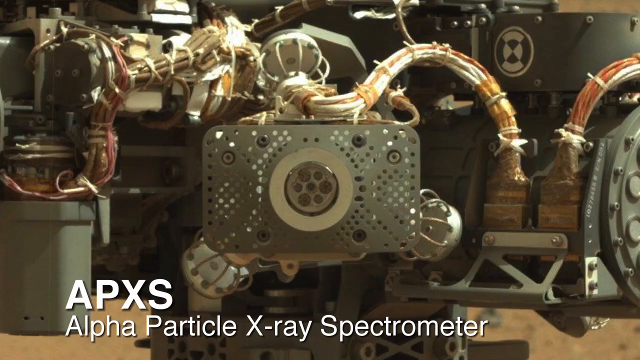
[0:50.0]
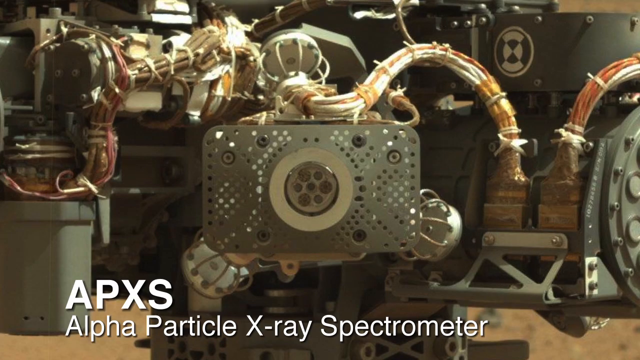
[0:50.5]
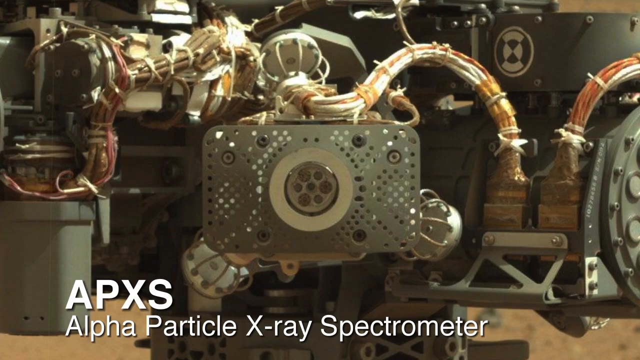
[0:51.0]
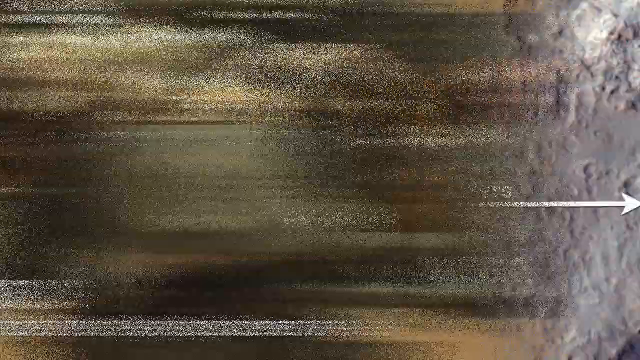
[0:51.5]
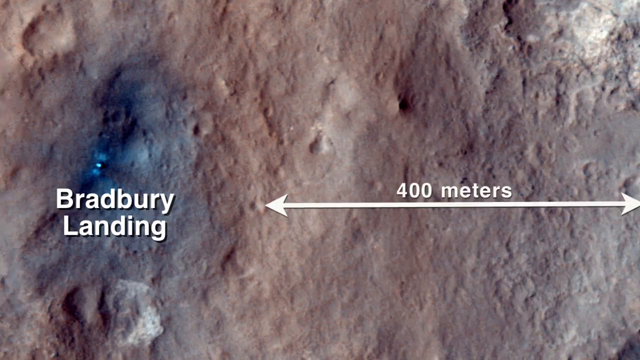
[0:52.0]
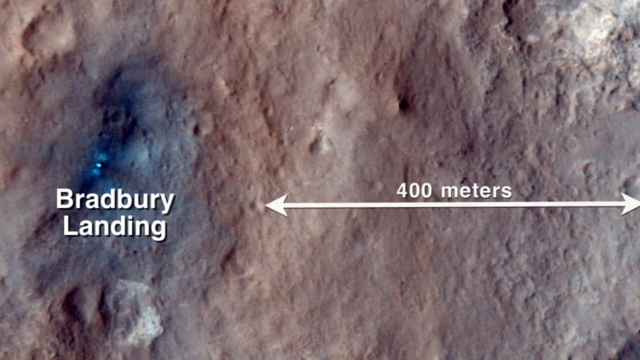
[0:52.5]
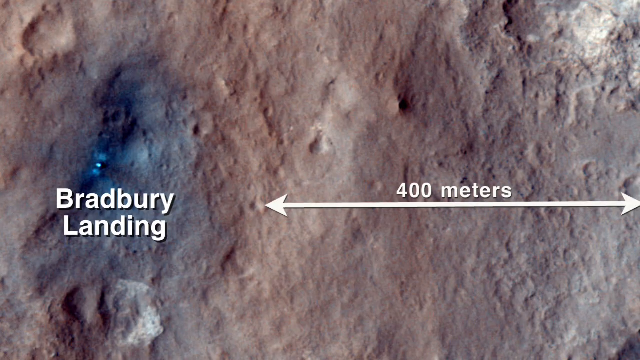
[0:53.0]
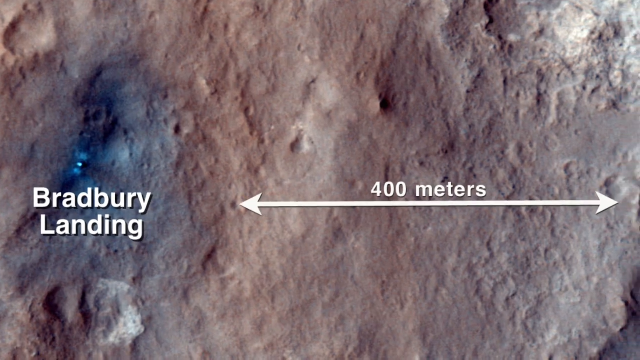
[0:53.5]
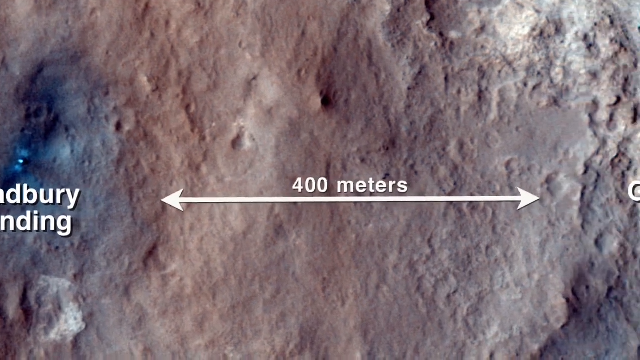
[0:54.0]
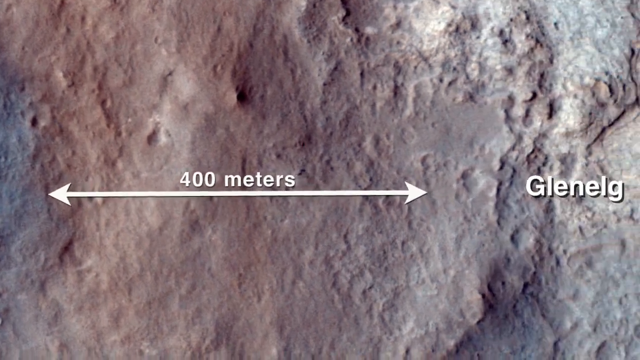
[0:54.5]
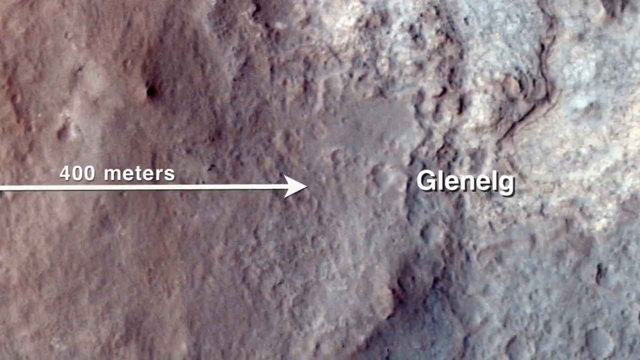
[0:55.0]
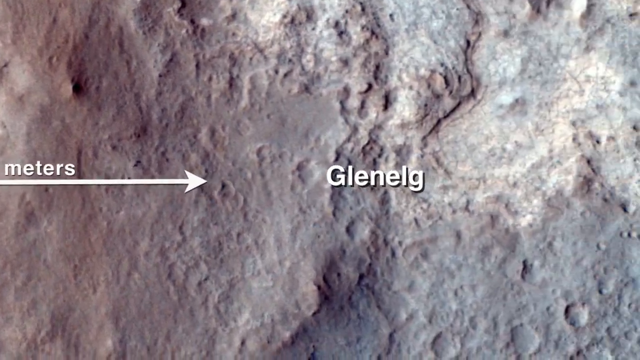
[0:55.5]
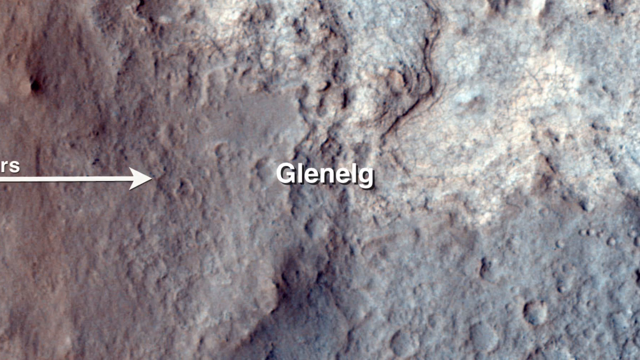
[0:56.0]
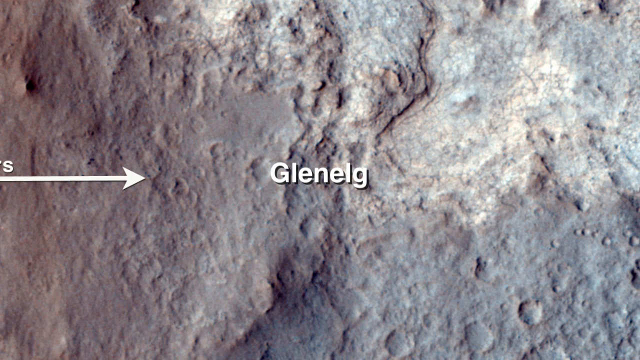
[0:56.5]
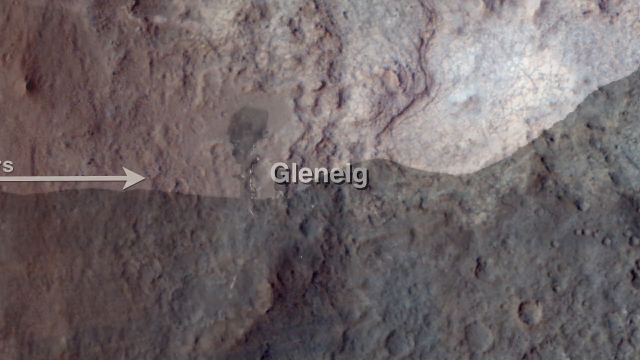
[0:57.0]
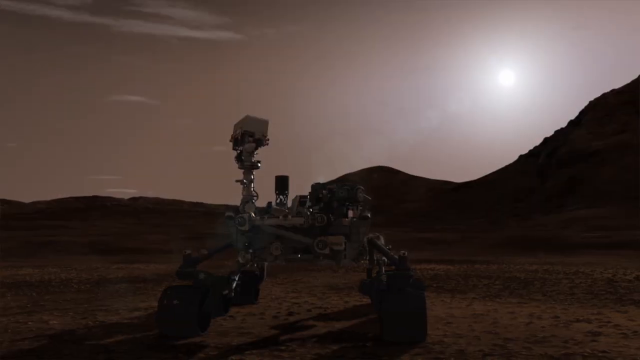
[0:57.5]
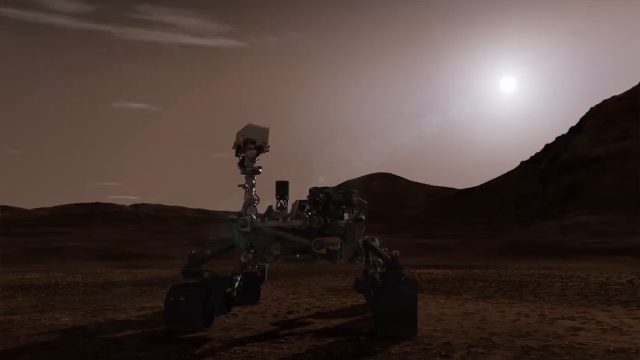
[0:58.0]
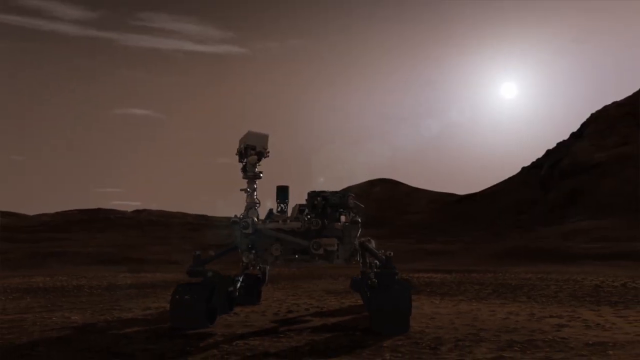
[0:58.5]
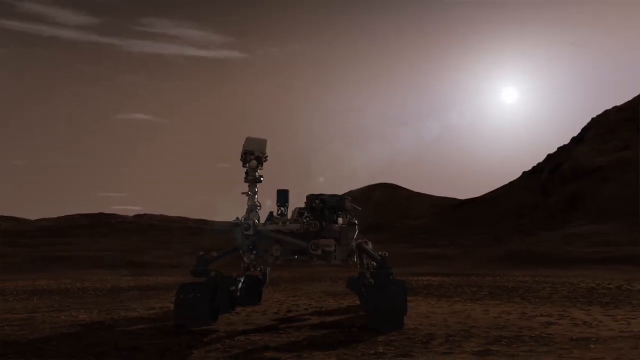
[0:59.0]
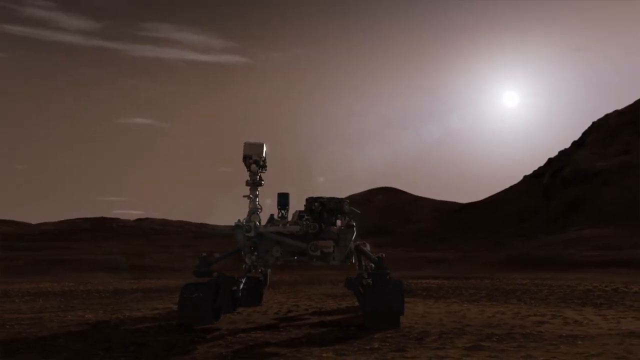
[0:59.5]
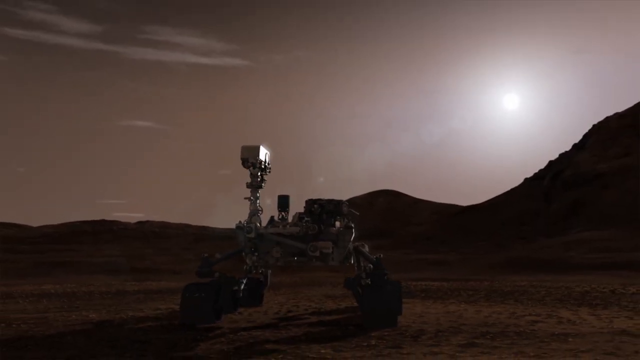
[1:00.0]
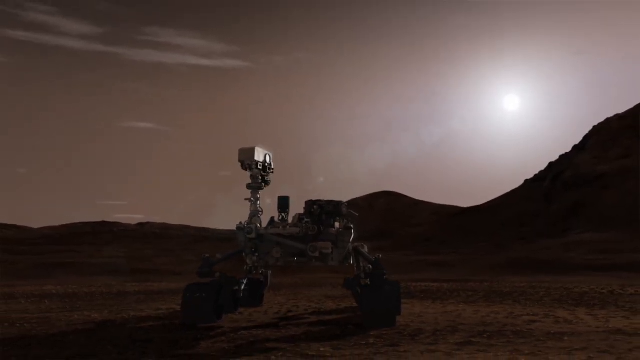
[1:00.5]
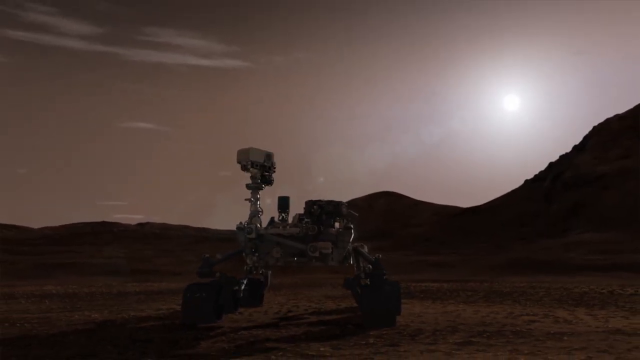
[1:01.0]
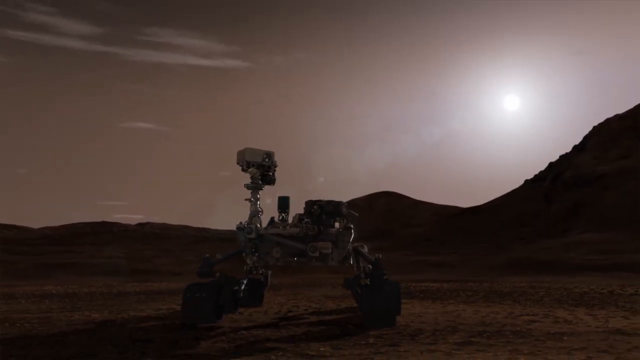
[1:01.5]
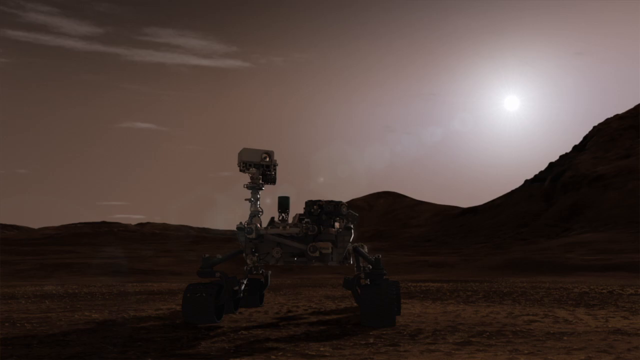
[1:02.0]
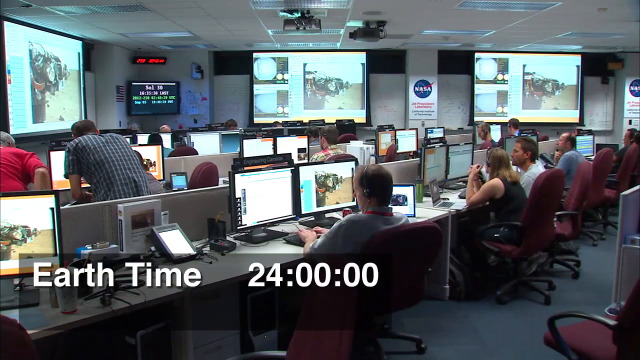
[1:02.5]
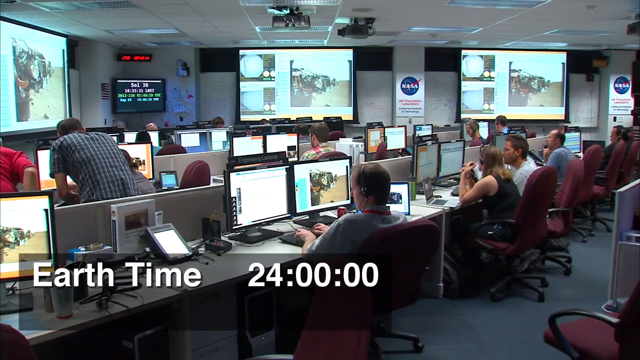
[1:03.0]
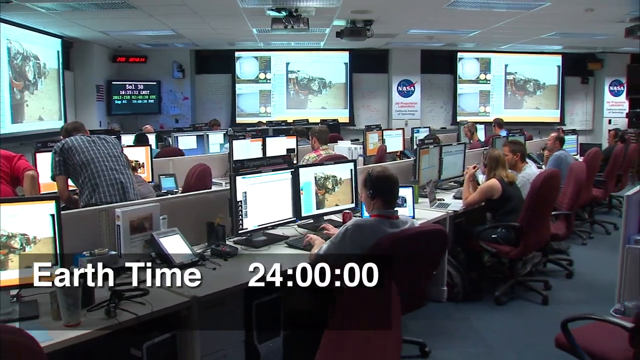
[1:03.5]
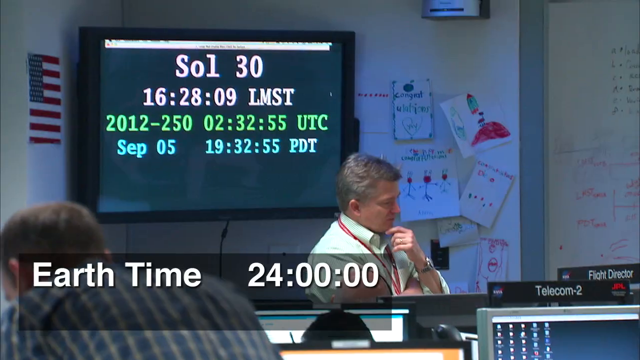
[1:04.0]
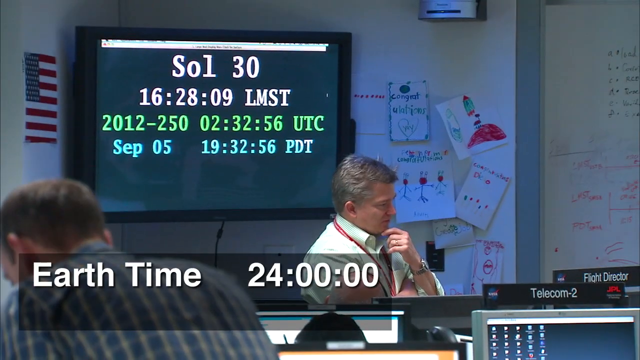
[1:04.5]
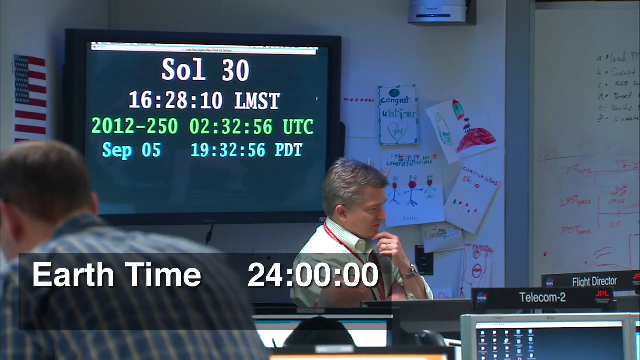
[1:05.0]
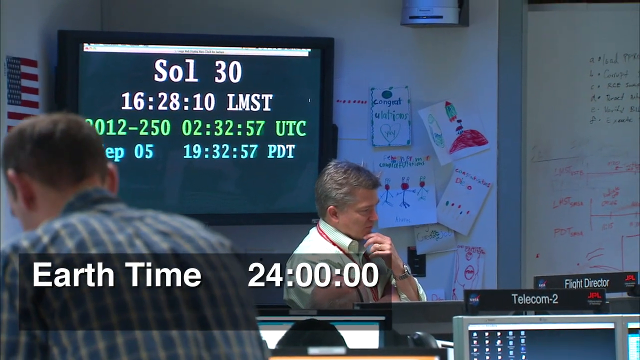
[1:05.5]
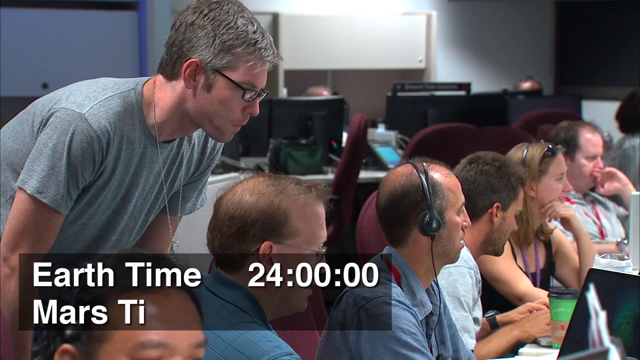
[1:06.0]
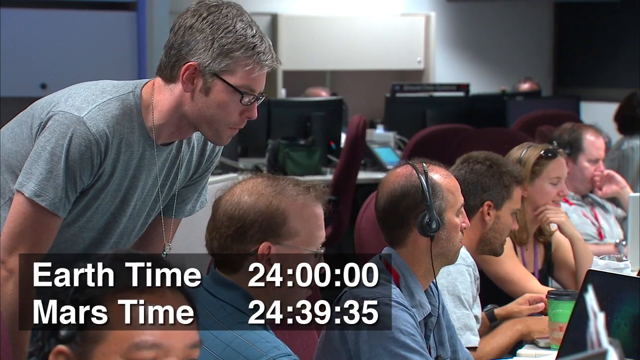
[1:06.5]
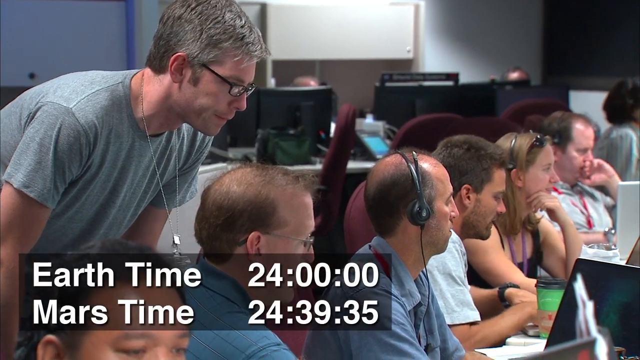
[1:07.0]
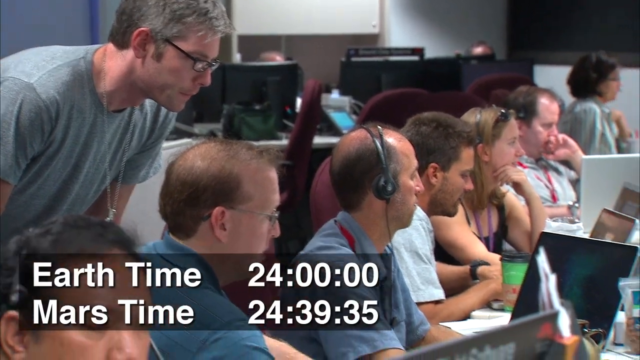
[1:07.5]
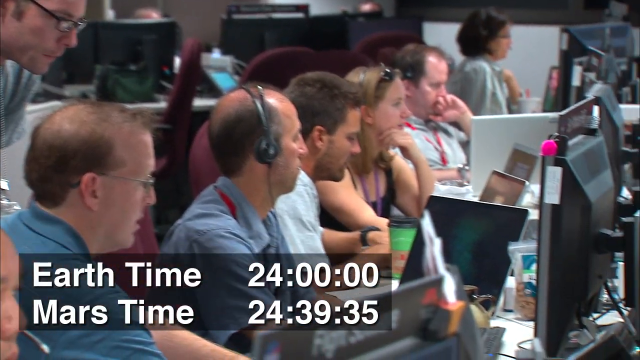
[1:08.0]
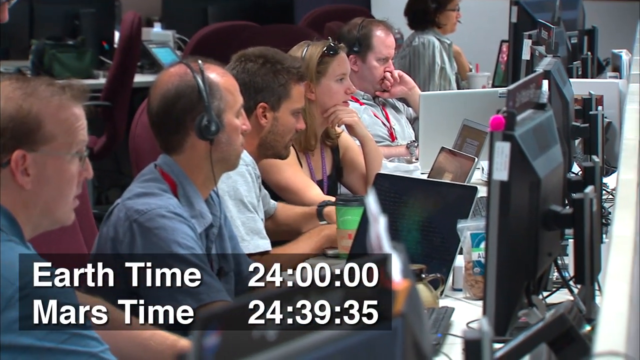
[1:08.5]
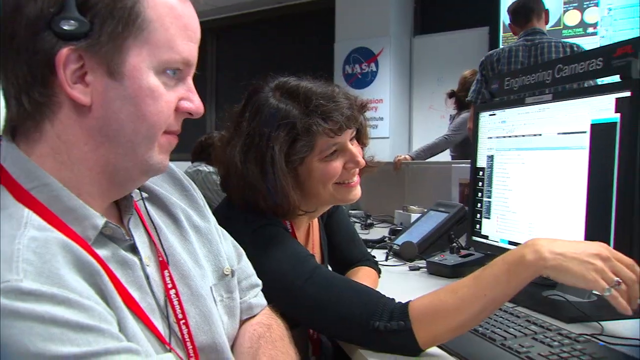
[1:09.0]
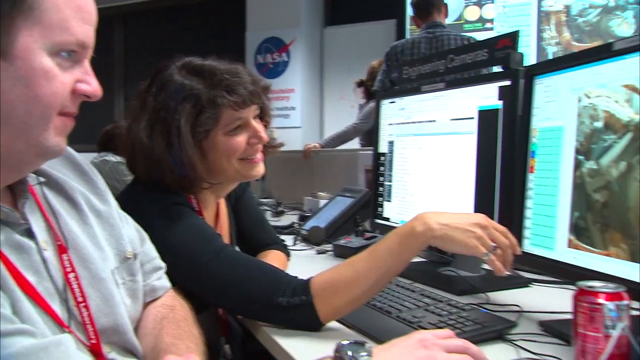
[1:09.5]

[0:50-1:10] A close-up shows the part of the rover captioned "APXS" for Alpha Particle X-ray Spectrometer. The view changes to a picture of the Martian surface in tones of brown and gray, with an area colored in blue on the left-hand side called Bradbury Landing. An arrow in the middle points at either end, with "400 meters" above it. The camera pans to the right to a lighter-colored area captioned in white as "Glenelg." The picture fades to the rover itself in the Martian sunset, apparently an artist's illustration, with some clouds in a gray sky and mountains moving up in the distance on the right. The top of the mechanism is spinning. The scene changes to a NASA control room with large computer screens on the walls and a NASA logo between them. In front are three rows of computer terminals, with people sitting in red chairs at each terminal, looking at them intently. A caption reads "Earth Time." The view quickly flashes to a large computer behind the scientists that says "Sol 30," followed by a close-up of one row of scientists all looking intently at their computer screens.